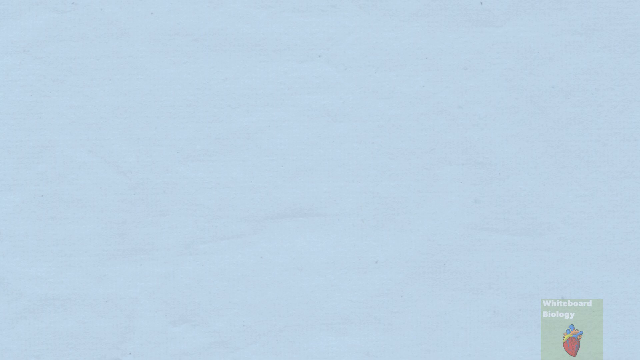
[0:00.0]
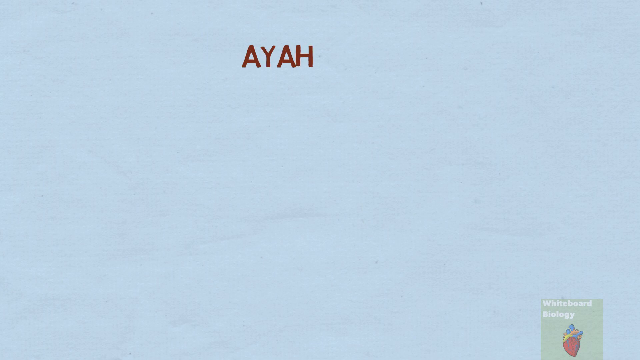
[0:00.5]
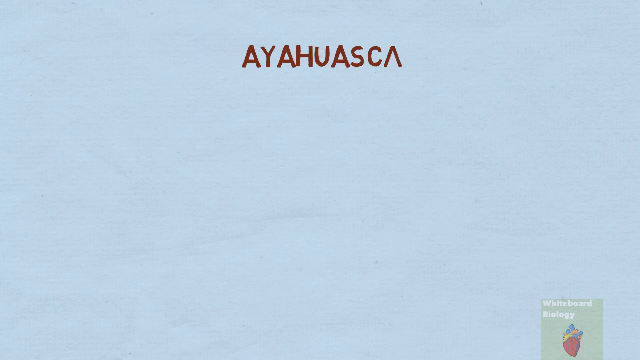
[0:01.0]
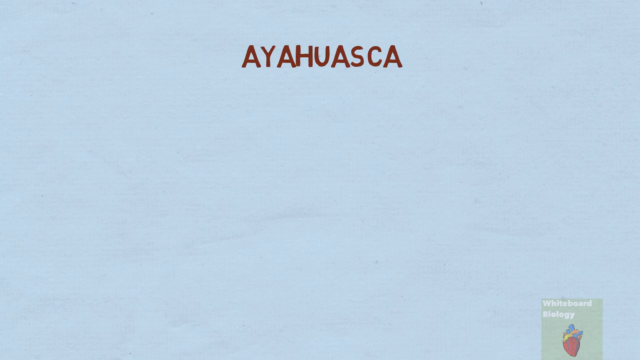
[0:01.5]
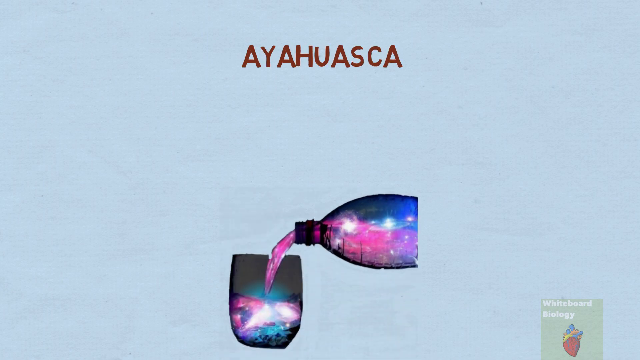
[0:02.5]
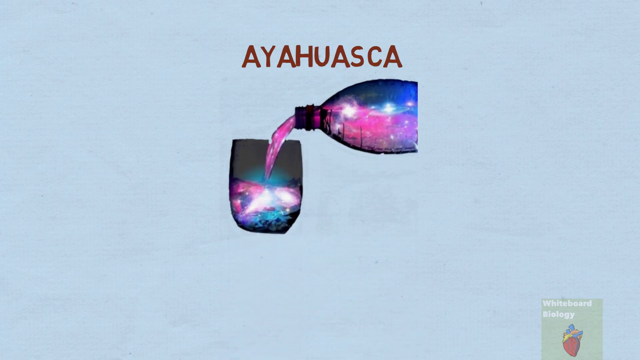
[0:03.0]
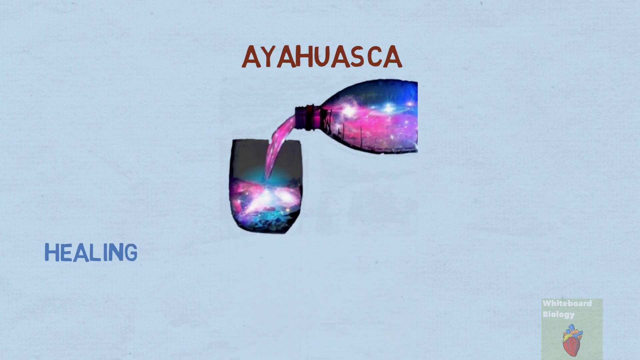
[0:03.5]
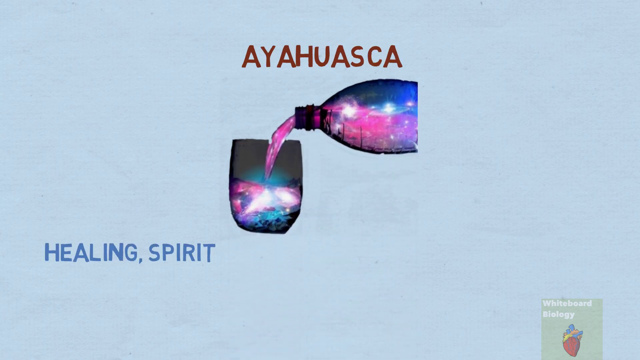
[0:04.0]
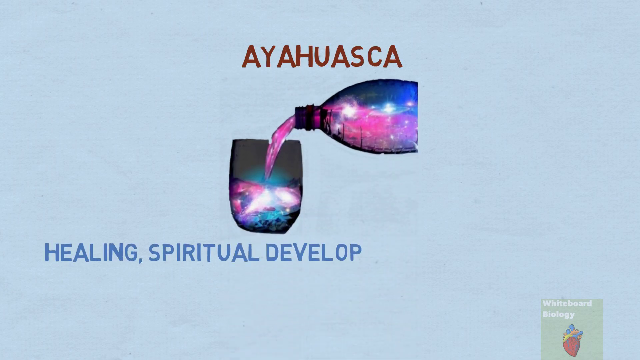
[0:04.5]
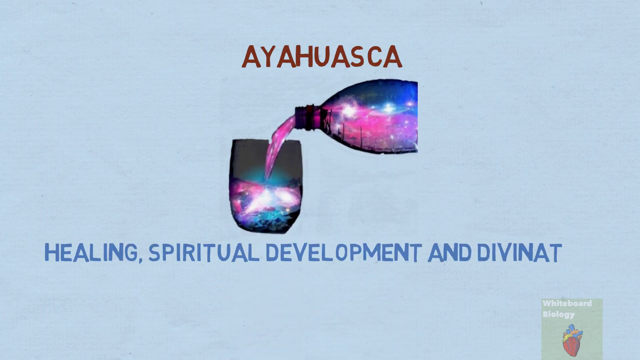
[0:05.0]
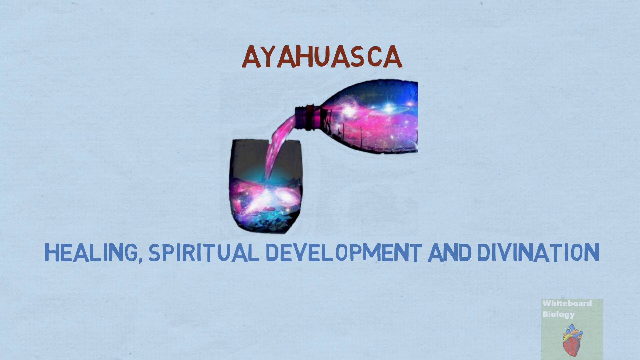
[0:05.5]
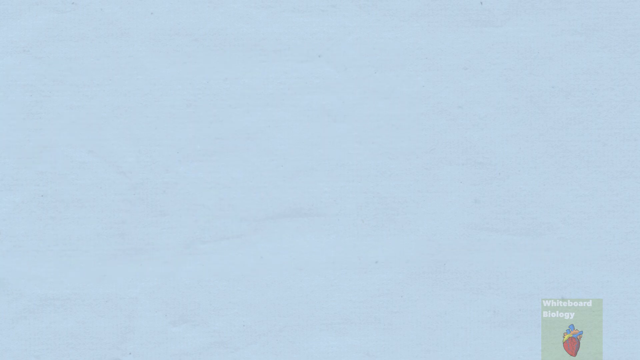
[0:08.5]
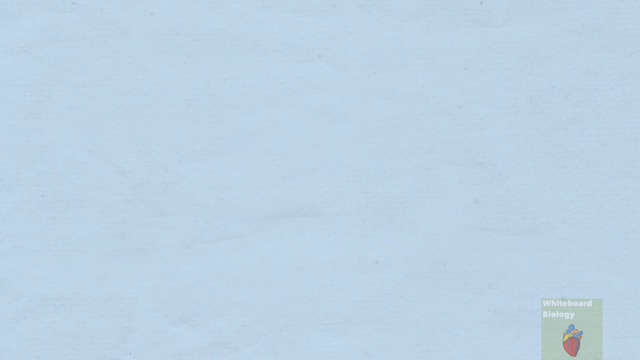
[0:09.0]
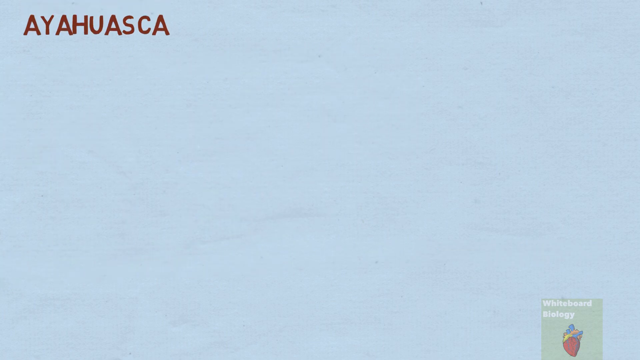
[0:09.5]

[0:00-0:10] A liquid is shown under a title about spiritual development. It does not look like pure or real water; it seems to have substances in it, like a mixture of chemicals with a purple and white color combination that looks more or less like space. The liquid is poured from a pot into a cup.